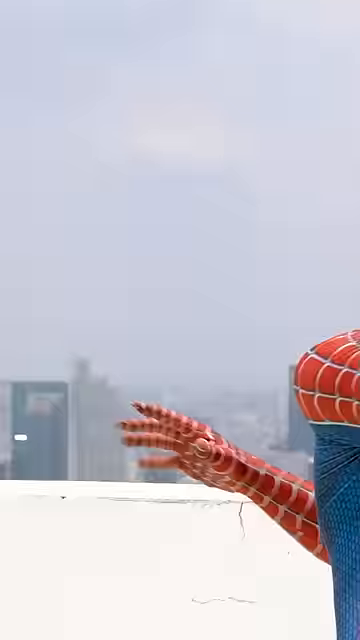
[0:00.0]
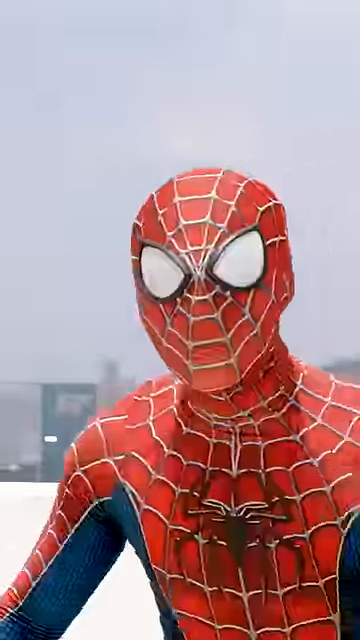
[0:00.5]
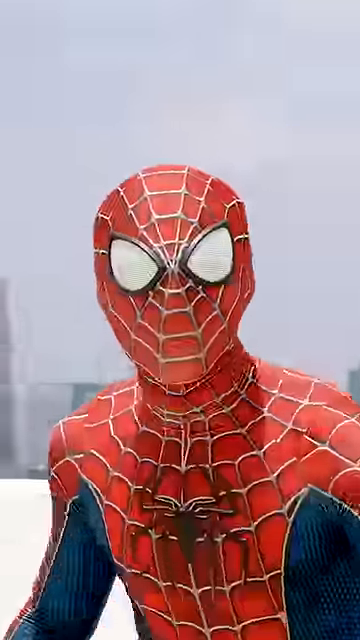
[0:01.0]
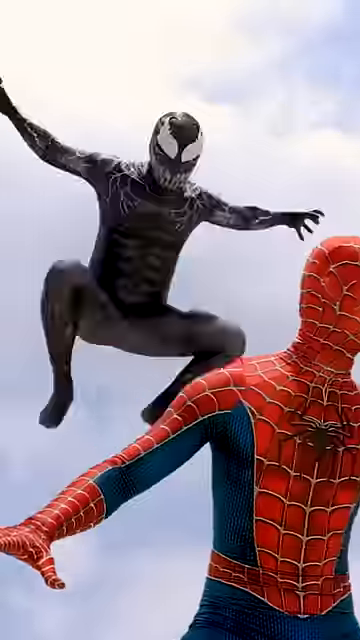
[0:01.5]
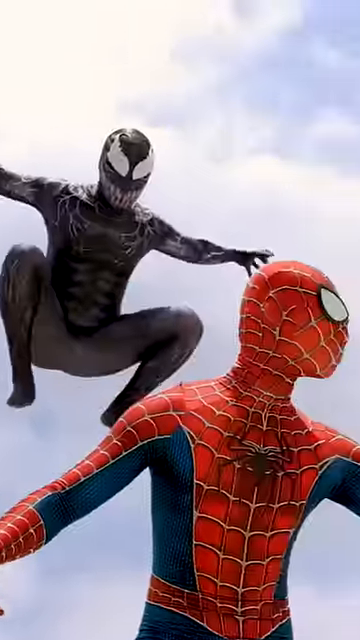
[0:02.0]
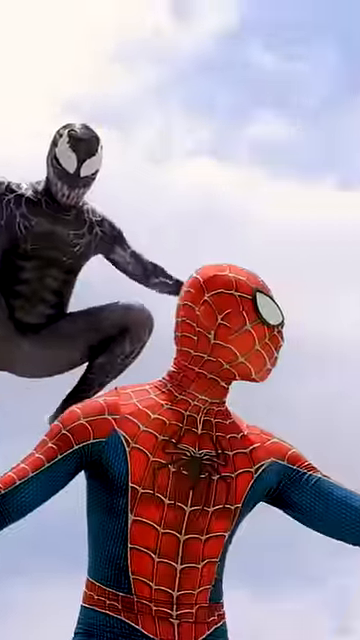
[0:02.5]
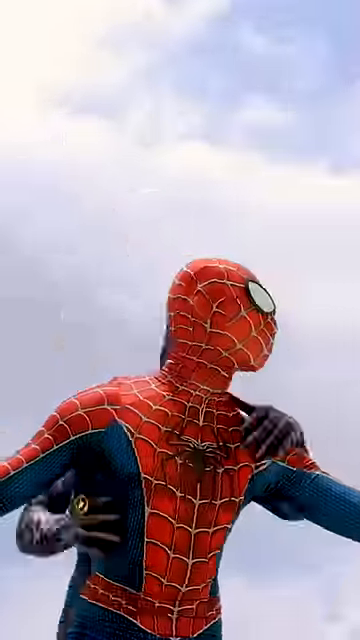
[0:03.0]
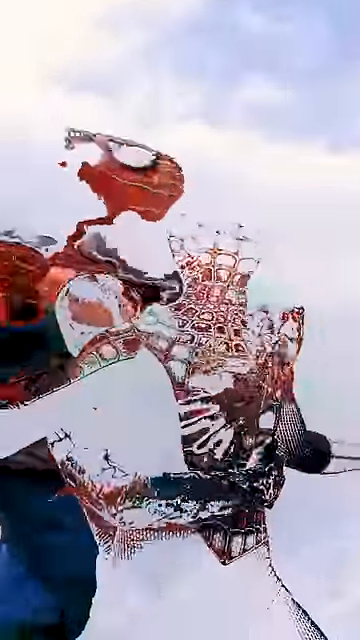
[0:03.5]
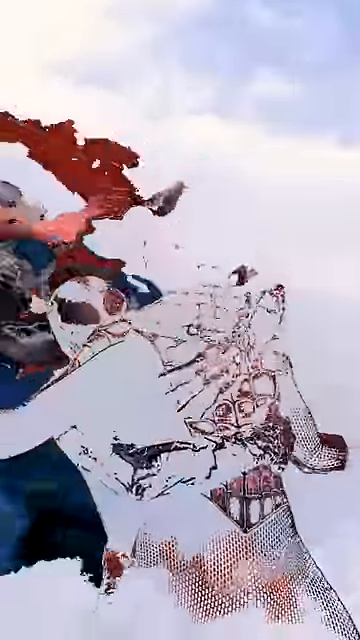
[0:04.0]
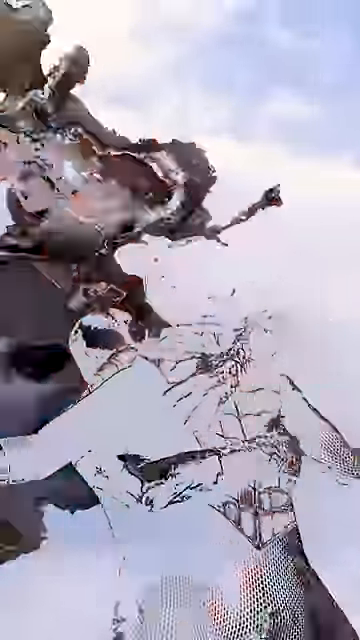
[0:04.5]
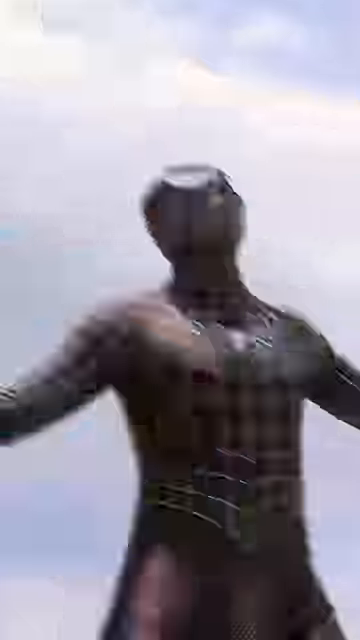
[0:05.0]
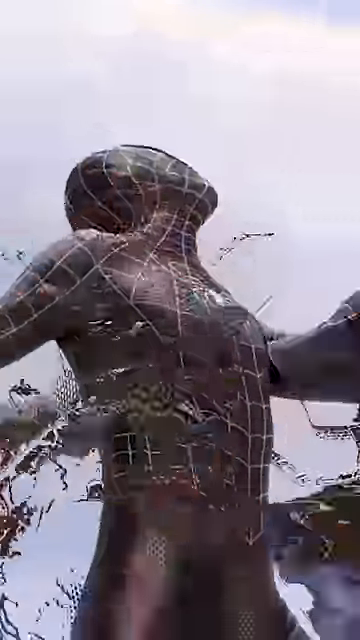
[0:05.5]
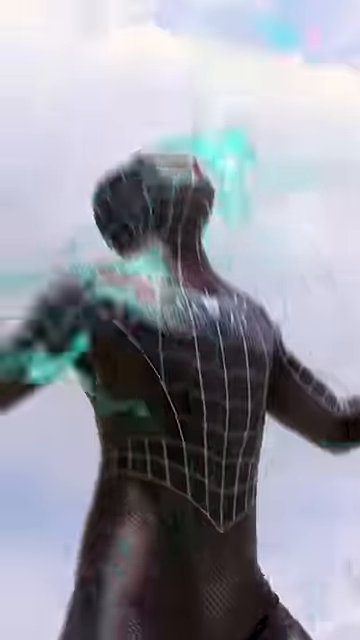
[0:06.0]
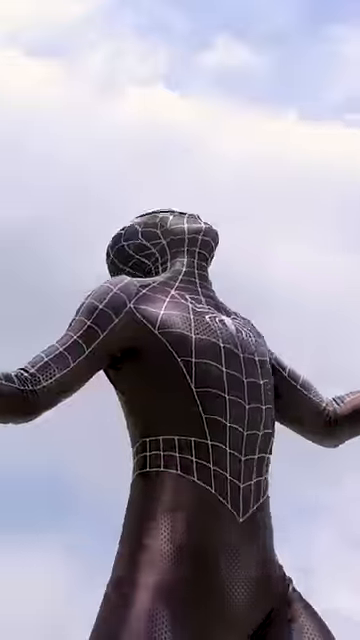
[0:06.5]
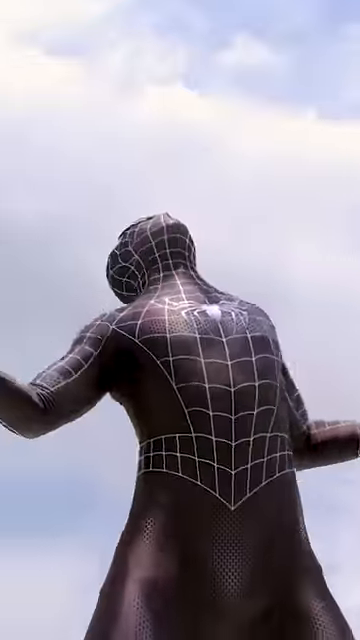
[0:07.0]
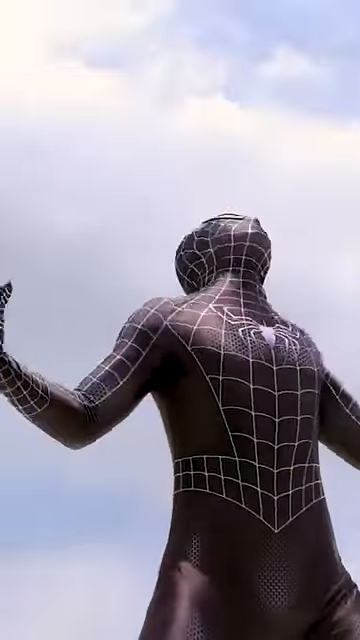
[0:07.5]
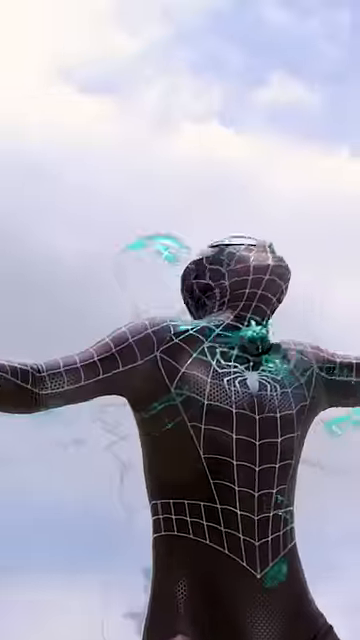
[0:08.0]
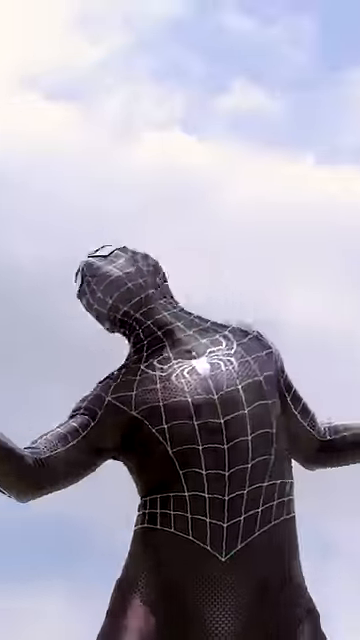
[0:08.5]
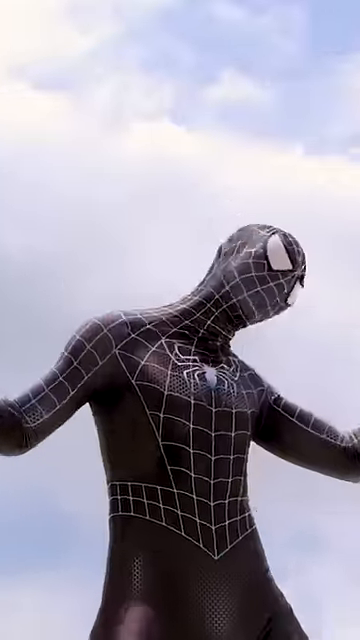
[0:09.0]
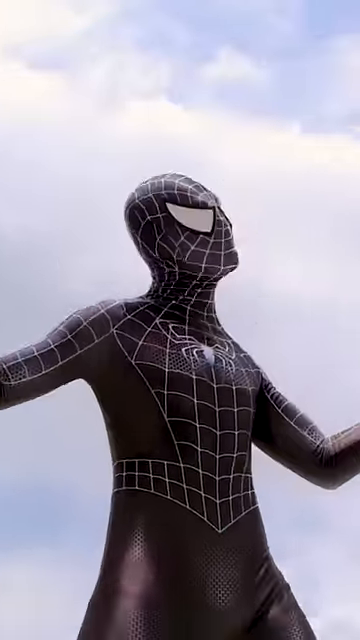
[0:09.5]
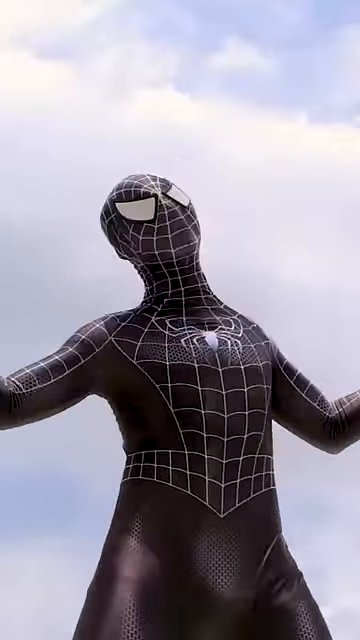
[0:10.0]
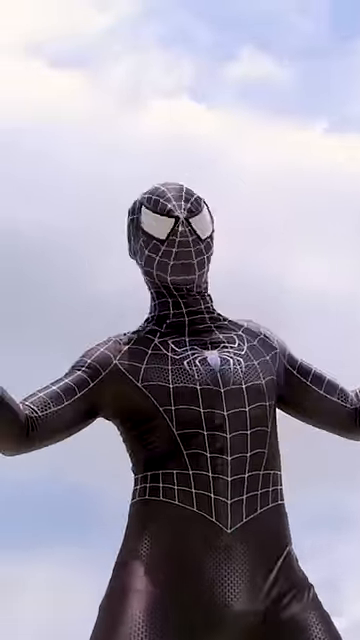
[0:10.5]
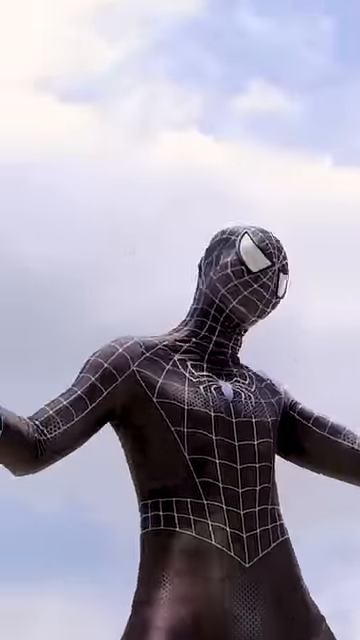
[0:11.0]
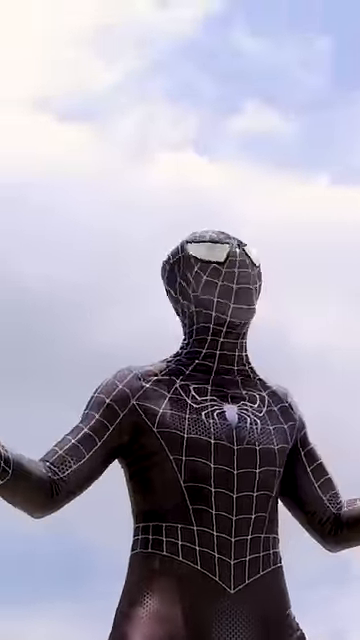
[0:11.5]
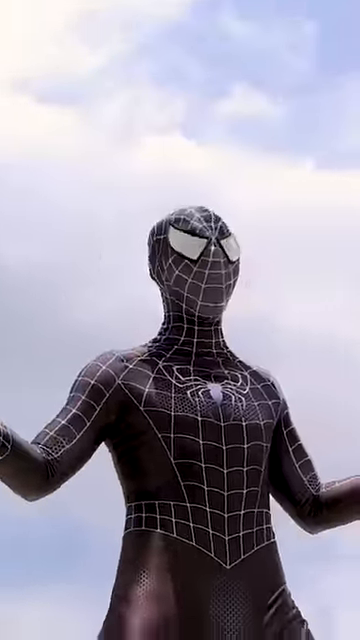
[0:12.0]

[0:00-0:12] The scene opens on what appears to be Spider-Man, looking sort of towards the camera in his red and blue jumpsuit. His eyes are very white, and there is a black spider on his chest. The background is very foggy and looks very grayish. As the scene changes, something flashes behind him very quickly, though it cannot be told what it is. The scene changes again, and Spider-Man is at the very bottom of the image looking towards the right, apparently with Venom: somebody dressed in a Venom outfit hops behind him, getting ready to attack. The figure has a very black outfit with large white eyes and sharp white teeth on the costume mask. In slow motion, he sort of lands into Spider-Man, and the image goes into a sort of weird shape where they kind of morph together, as if the video glitches. Spider-Man has then been replaced into a black suit; it is primarily black, but white webs go out across the chest and there is now a white spider on his chest. His neck goes left and right and his head bobs, and he seems to have been completely transformed into a sort of black and white Spider-Man. At the very end, the background shows very white clouds, with barely any very blue sky visible.